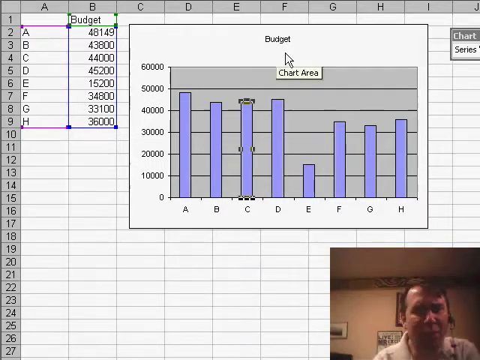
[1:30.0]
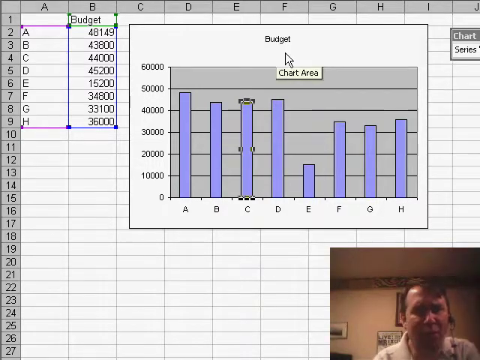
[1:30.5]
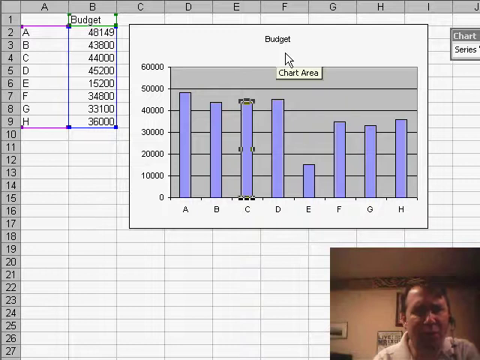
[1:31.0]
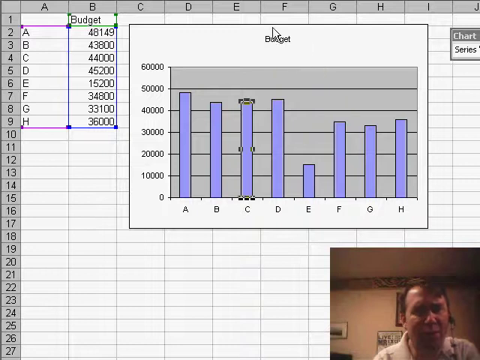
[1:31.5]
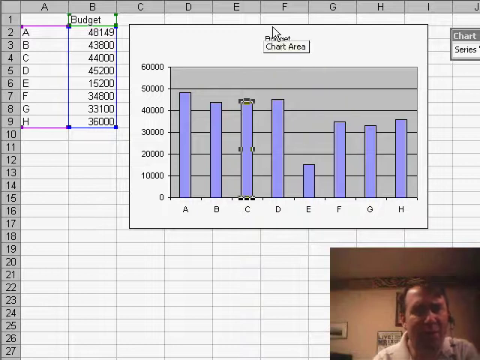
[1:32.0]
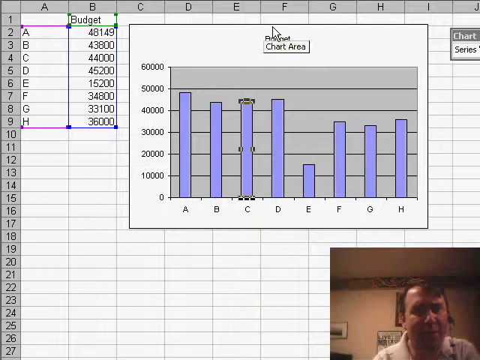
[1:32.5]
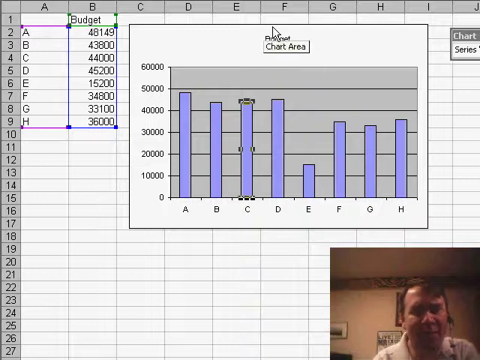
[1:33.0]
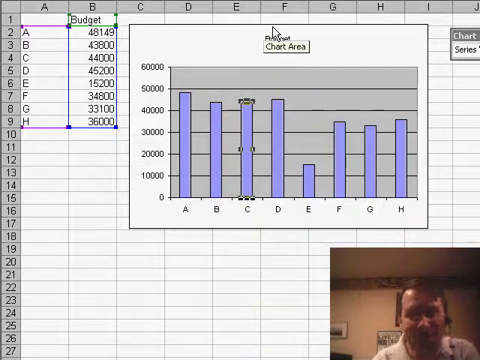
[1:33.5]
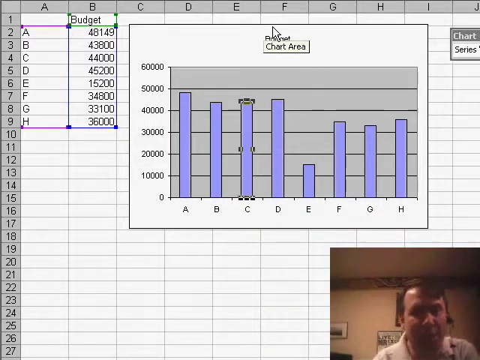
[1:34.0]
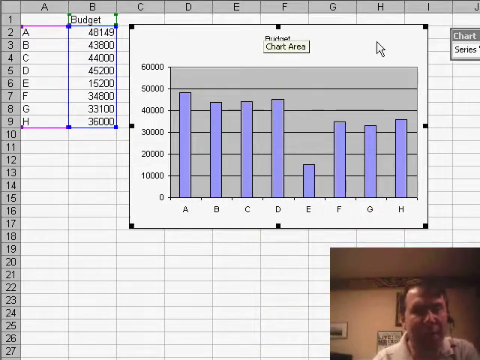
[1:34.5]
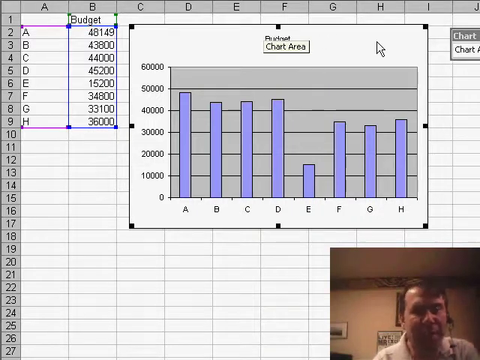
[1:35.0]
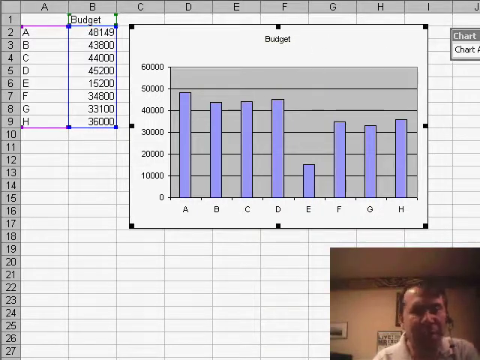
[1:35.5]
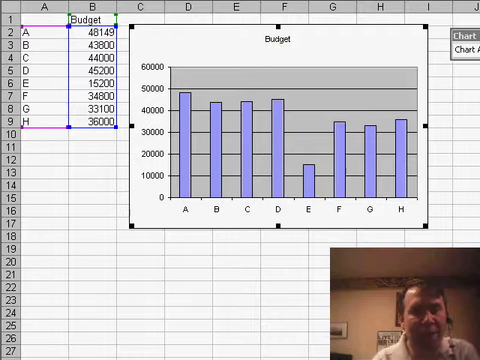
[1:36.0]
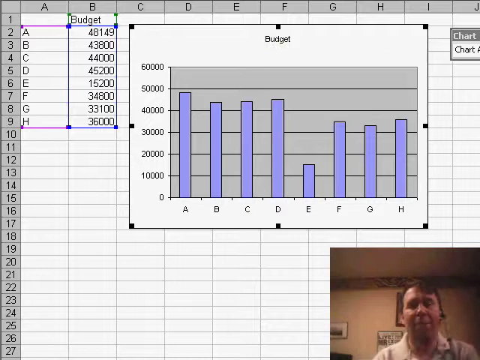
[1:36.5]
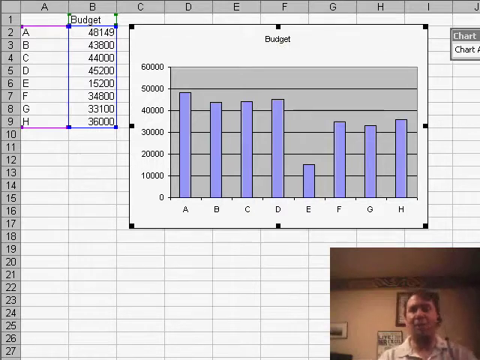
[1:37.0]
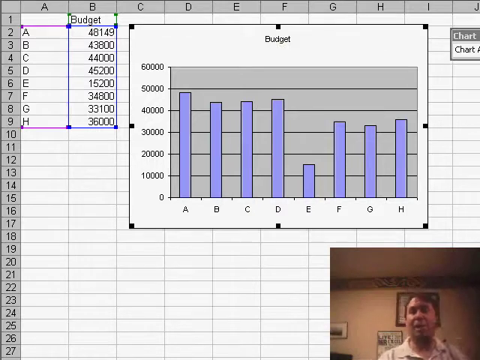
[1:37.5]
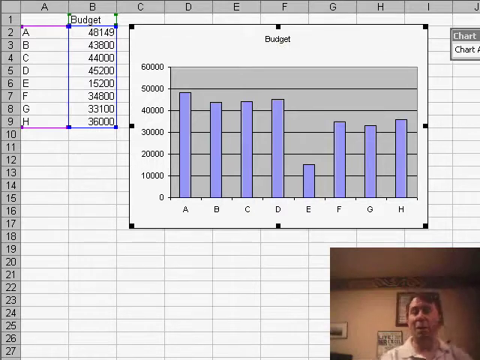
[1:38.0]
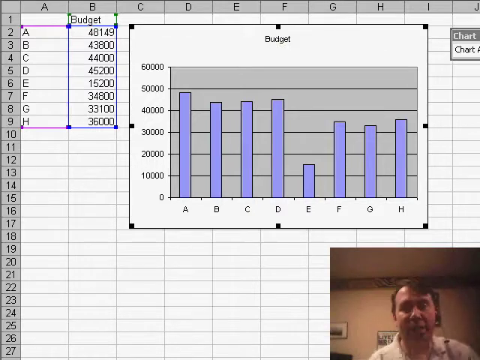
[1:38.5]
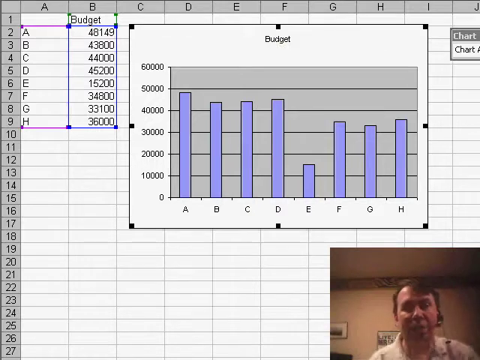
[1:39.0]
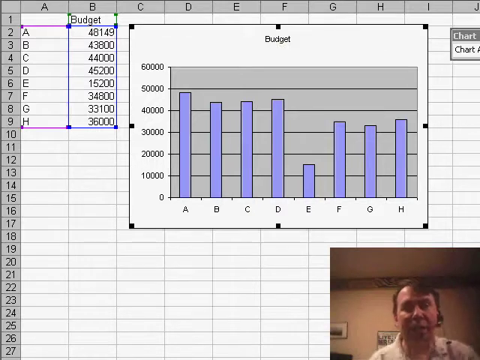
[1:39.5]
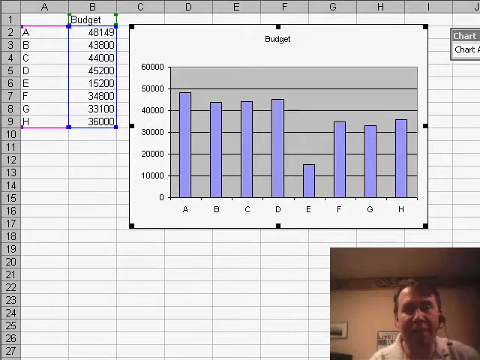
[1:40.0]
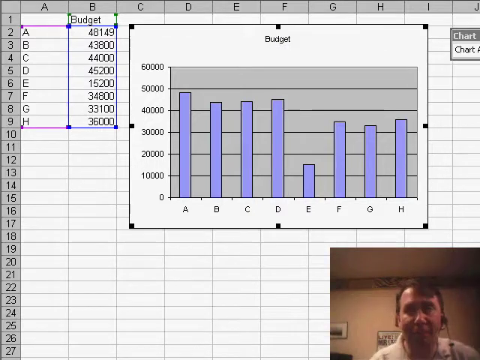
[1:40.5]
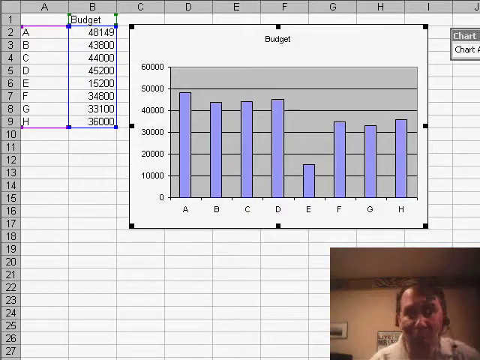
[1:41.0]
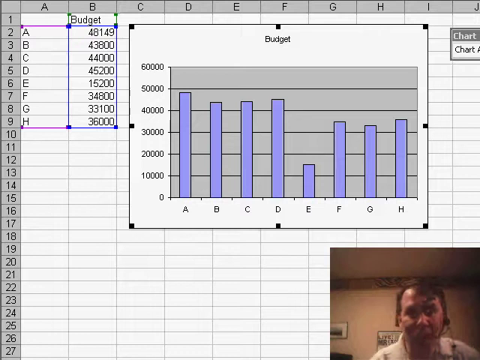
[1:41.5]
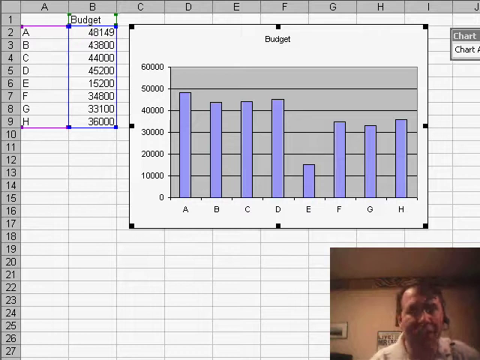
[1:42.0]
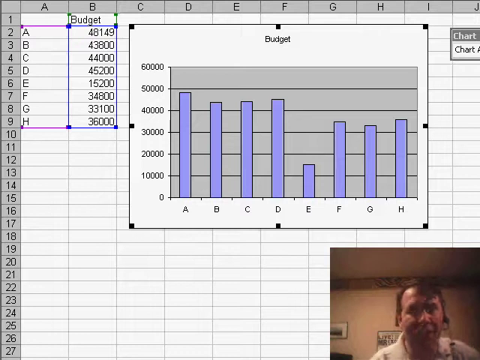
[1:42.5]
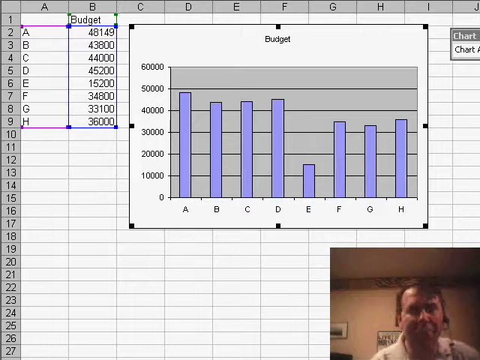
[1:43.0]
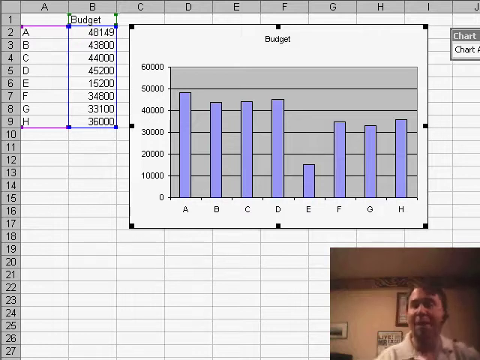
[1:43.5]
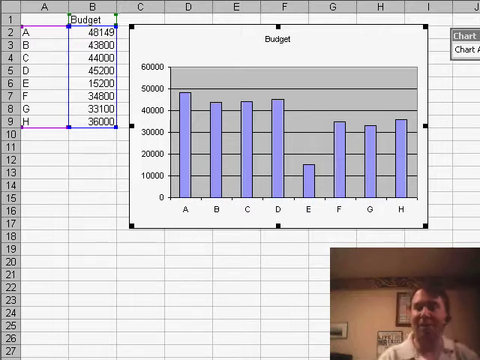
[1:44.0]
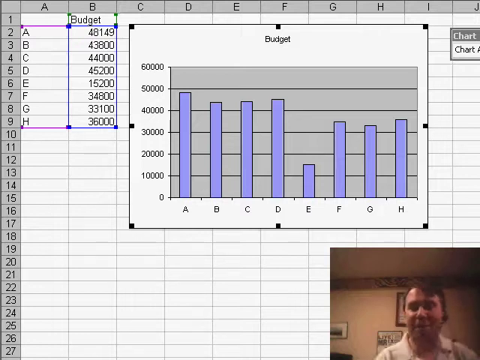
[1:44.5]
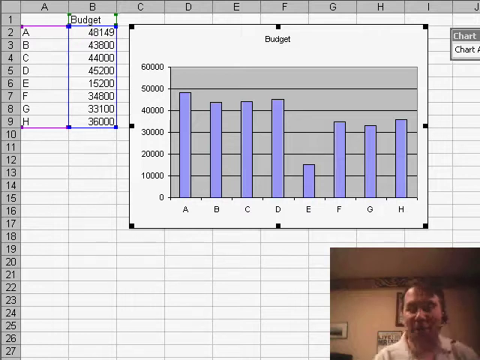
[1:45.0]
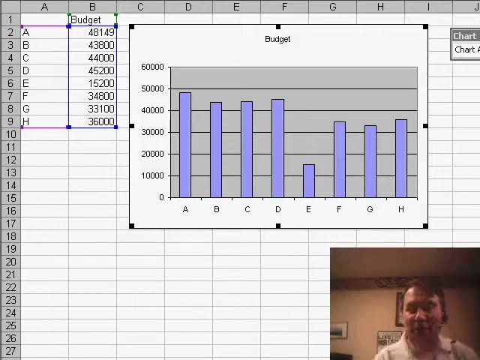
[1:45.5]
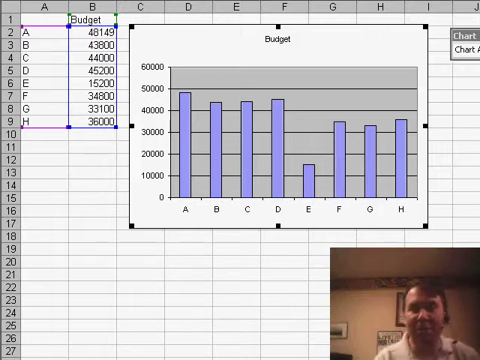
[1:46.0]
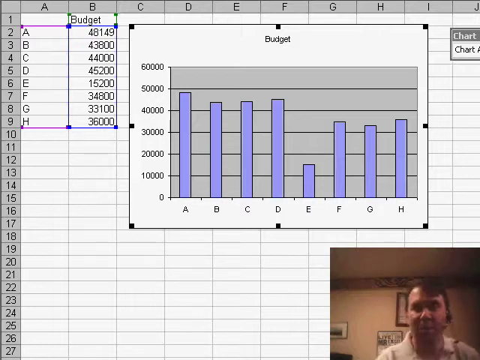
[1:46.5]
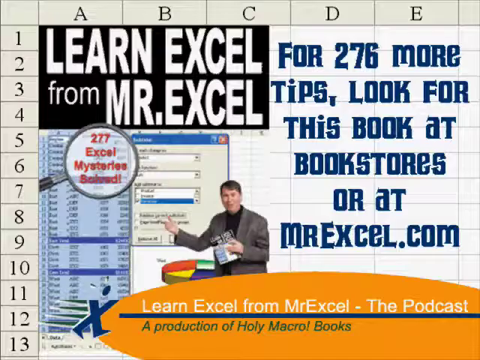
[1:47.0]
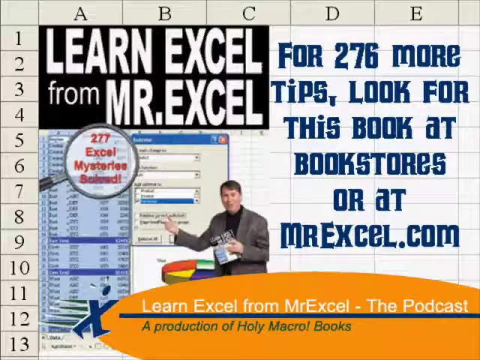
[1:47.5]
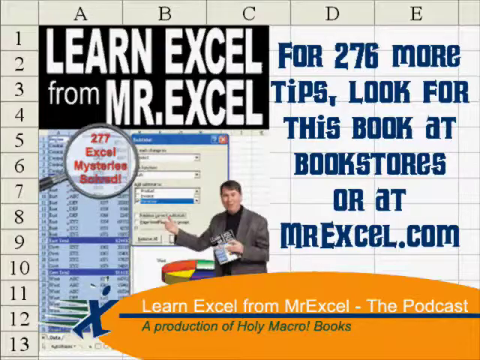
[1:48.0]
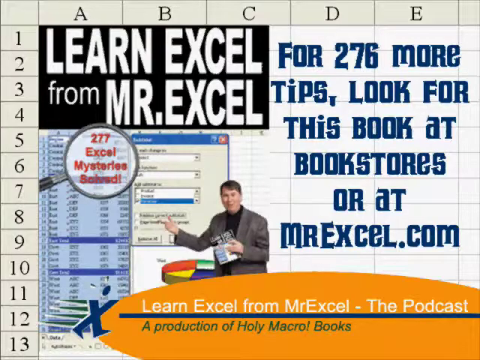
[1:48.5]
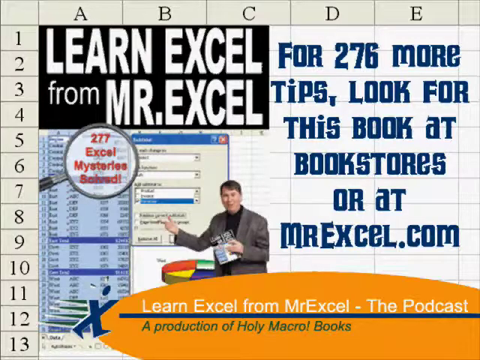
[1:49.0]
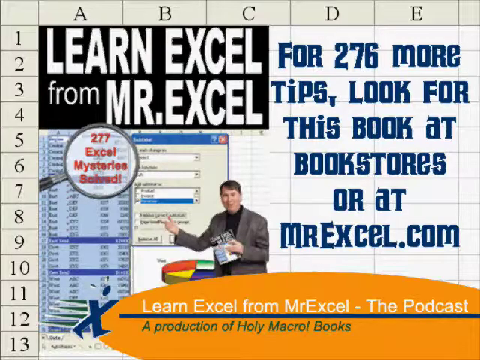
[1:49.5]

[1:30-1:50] The Excel spreadsheet shows the budget on the left, highlighted going down in blue, and to its left the letters under column A going down, highlighted in purple. To the right is the bar graph made from the numbers entered as the budget. Moving the bars up and down increases or decreases the numbers under budget. In the bottom right corner of the screen, below the graph, the man wearing a headset speaks to the camera; it looks like he is inside his home.